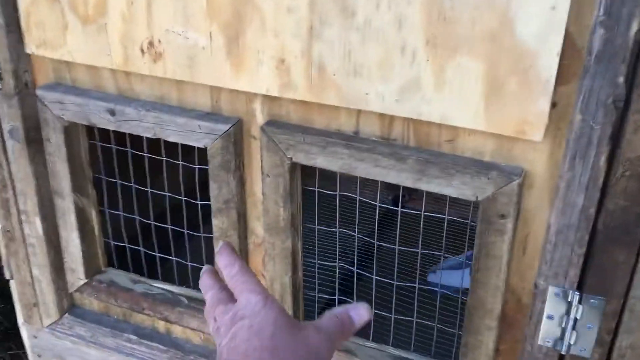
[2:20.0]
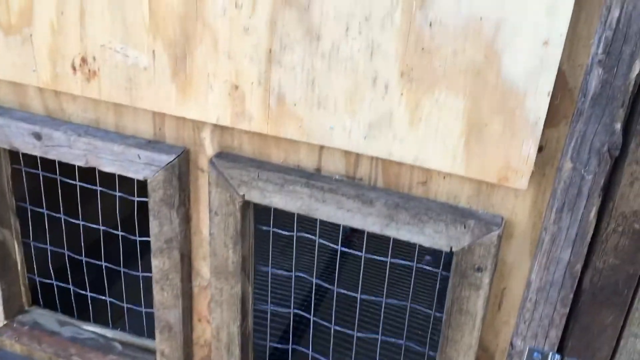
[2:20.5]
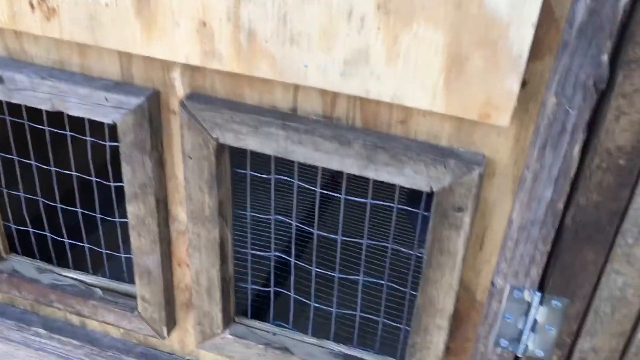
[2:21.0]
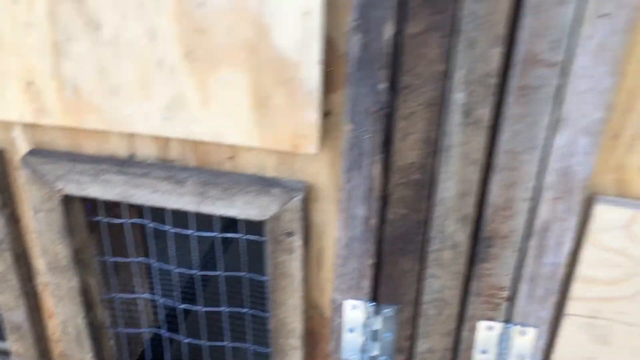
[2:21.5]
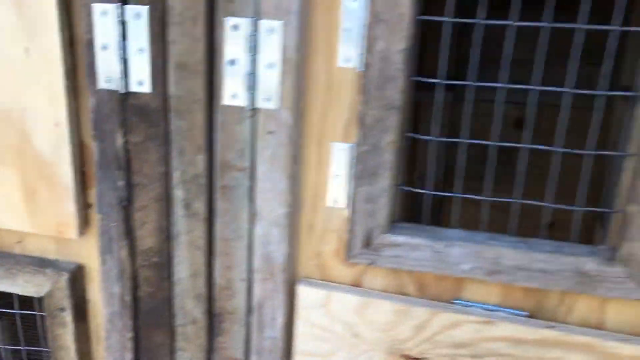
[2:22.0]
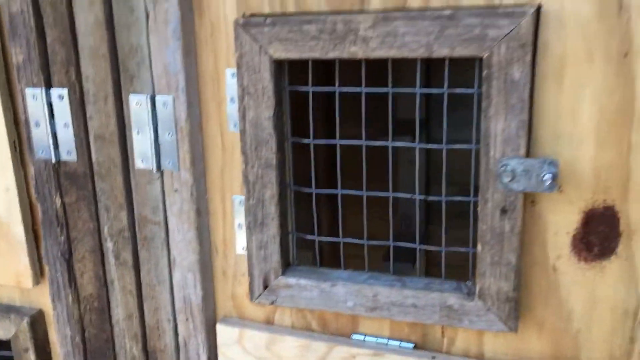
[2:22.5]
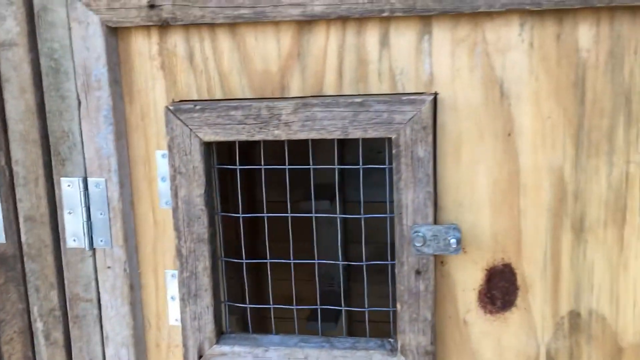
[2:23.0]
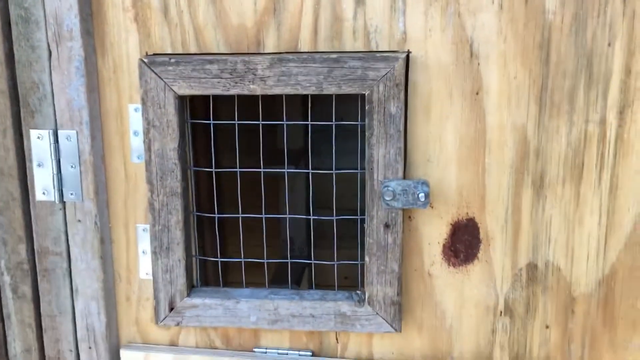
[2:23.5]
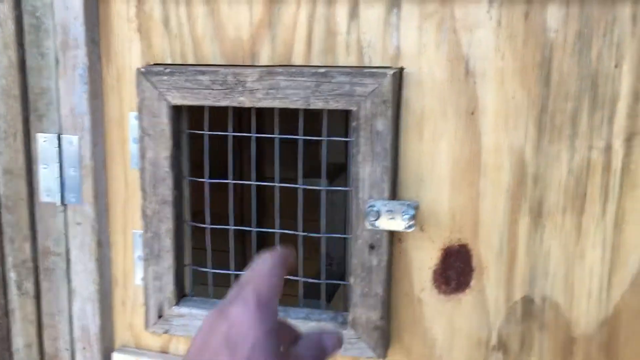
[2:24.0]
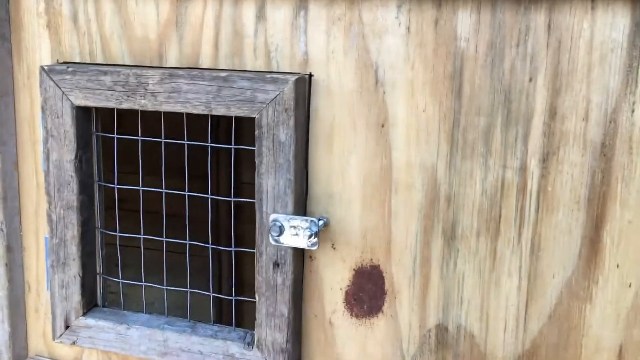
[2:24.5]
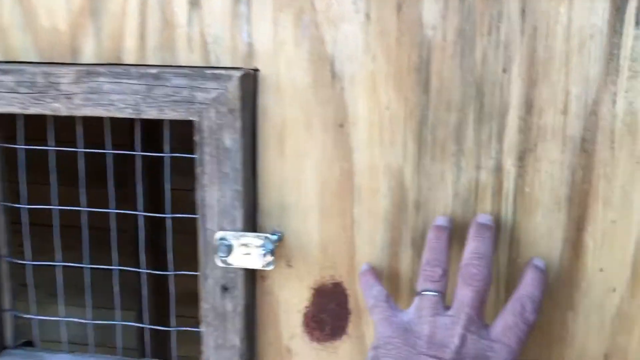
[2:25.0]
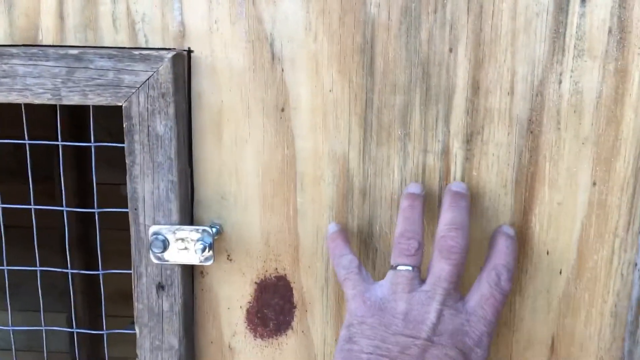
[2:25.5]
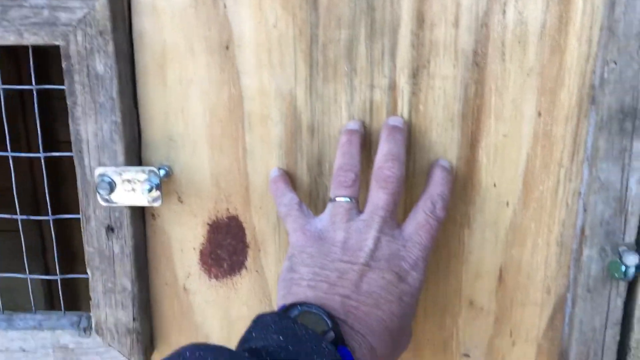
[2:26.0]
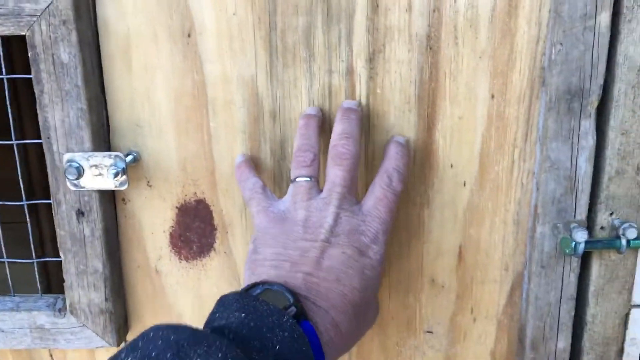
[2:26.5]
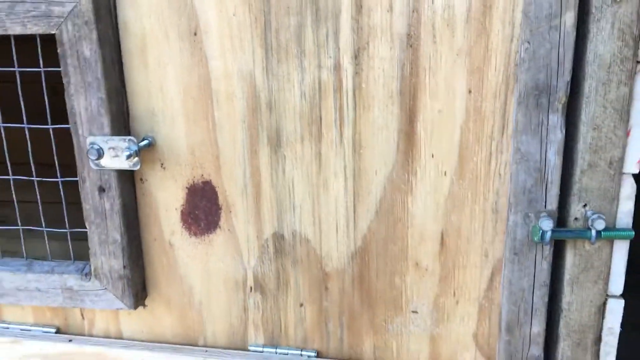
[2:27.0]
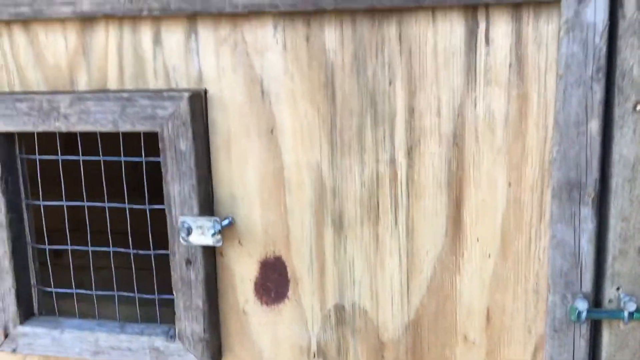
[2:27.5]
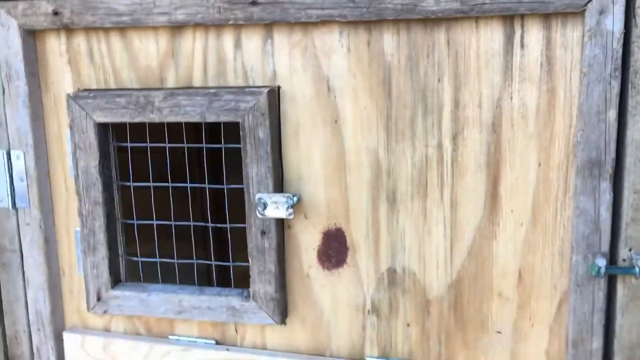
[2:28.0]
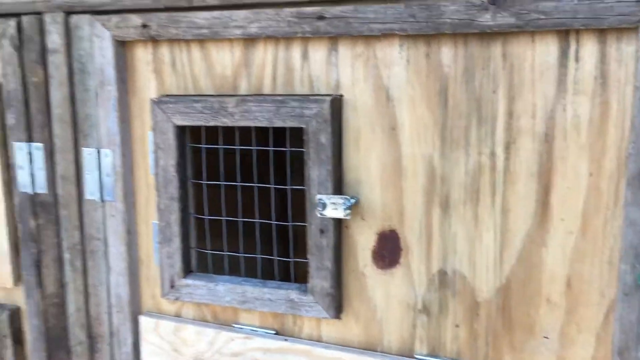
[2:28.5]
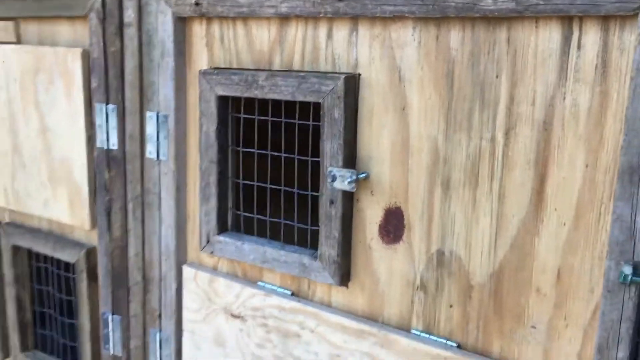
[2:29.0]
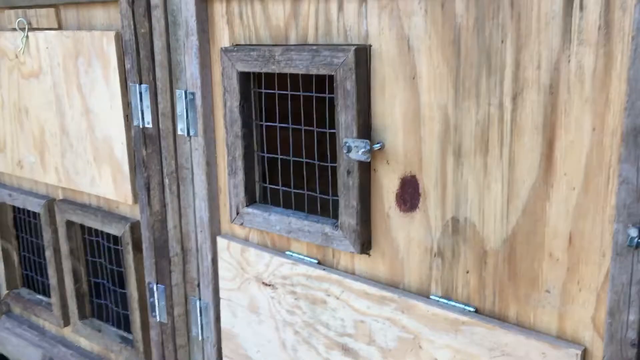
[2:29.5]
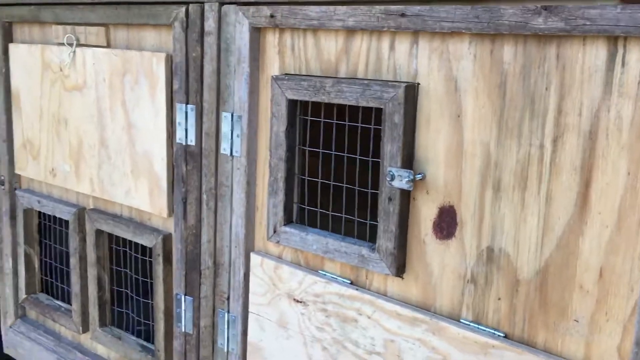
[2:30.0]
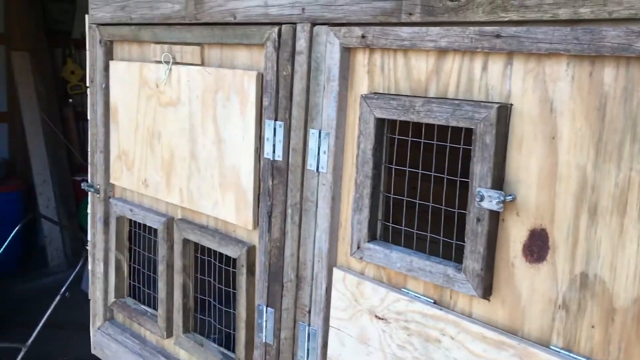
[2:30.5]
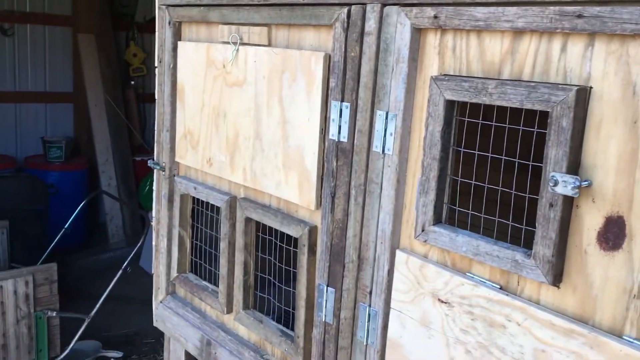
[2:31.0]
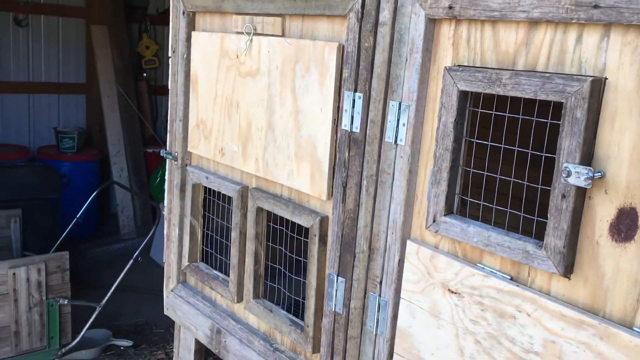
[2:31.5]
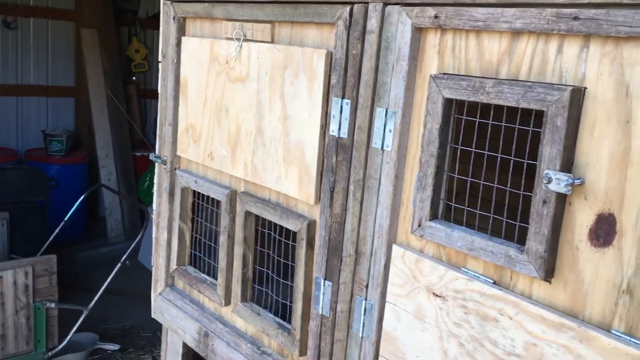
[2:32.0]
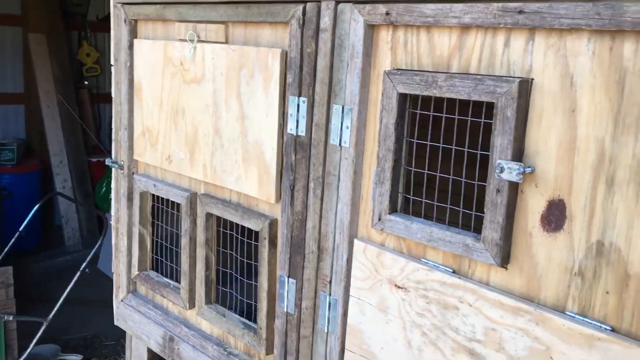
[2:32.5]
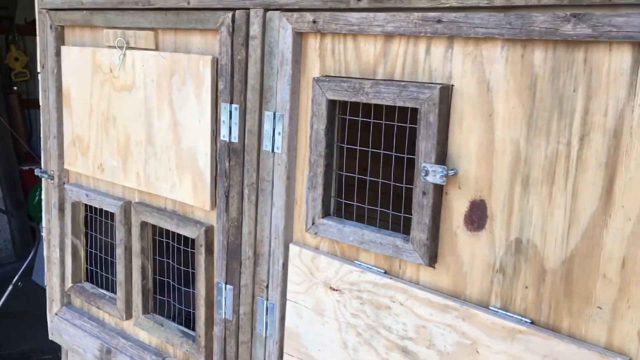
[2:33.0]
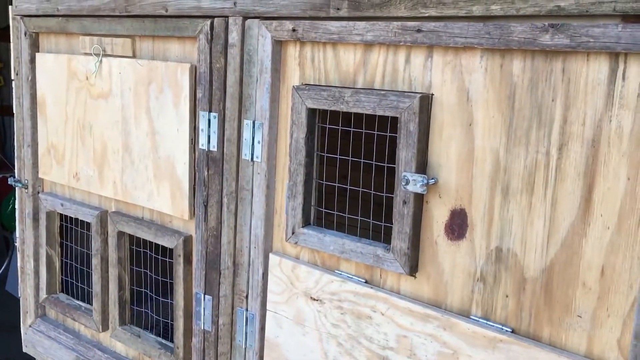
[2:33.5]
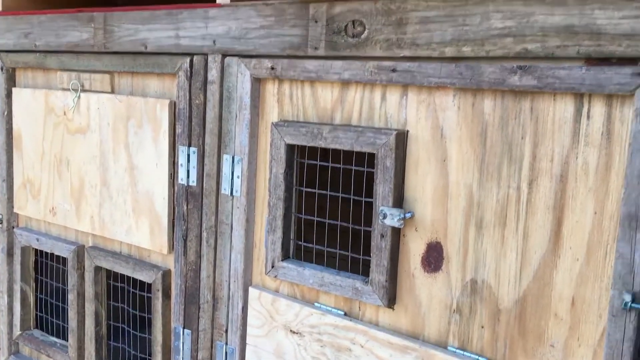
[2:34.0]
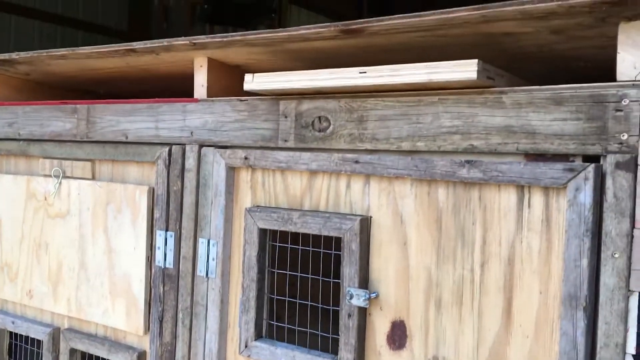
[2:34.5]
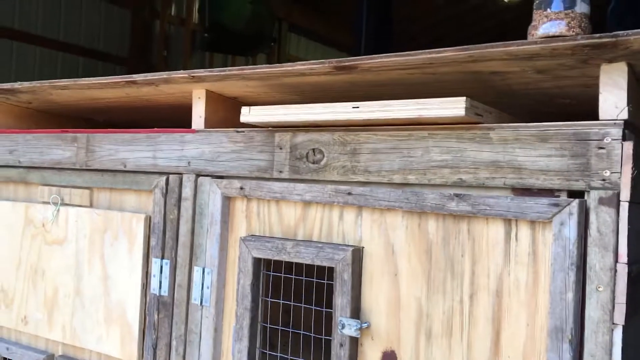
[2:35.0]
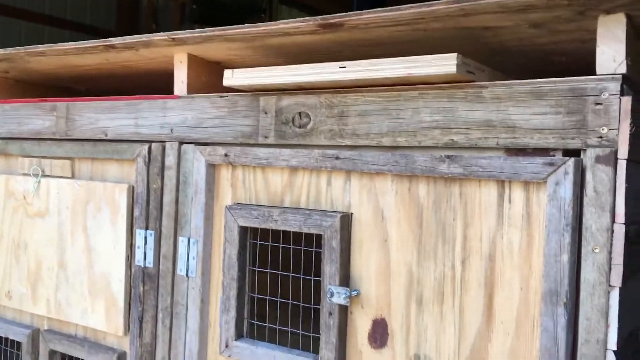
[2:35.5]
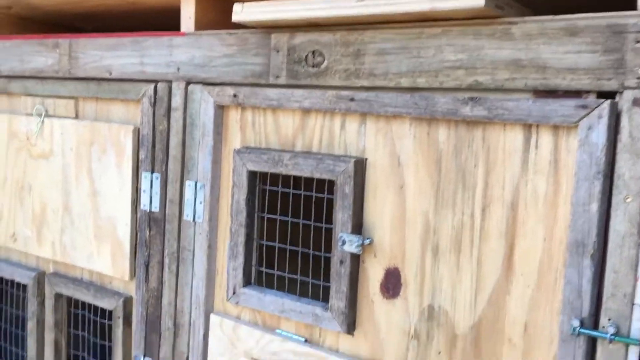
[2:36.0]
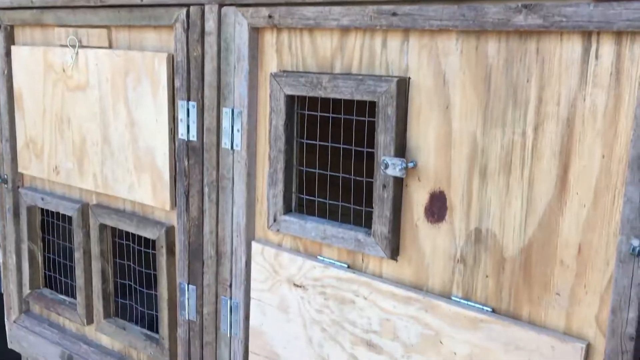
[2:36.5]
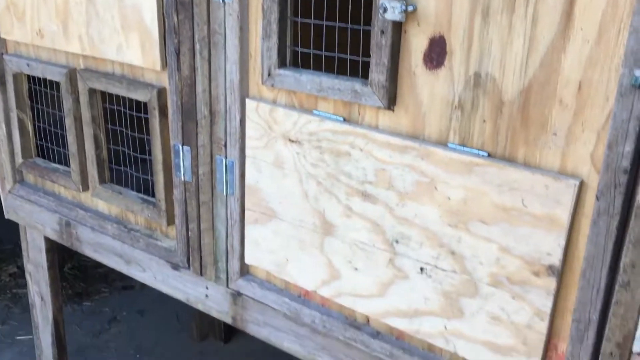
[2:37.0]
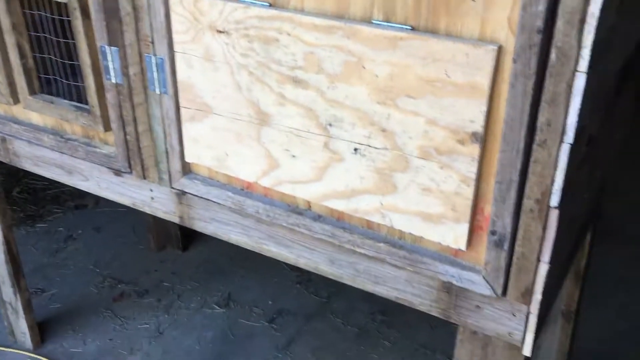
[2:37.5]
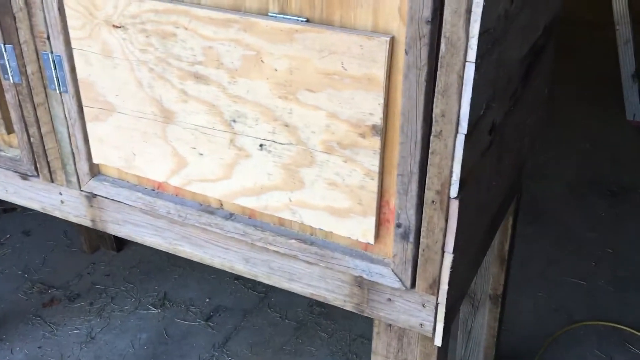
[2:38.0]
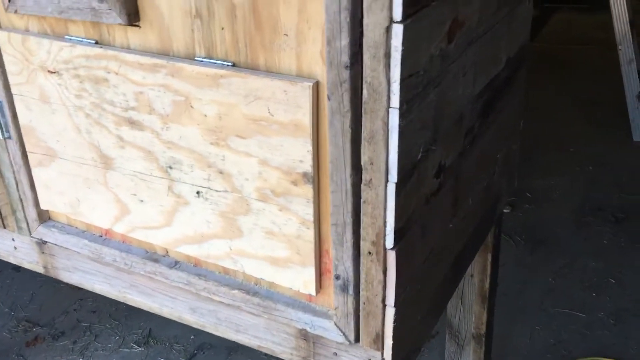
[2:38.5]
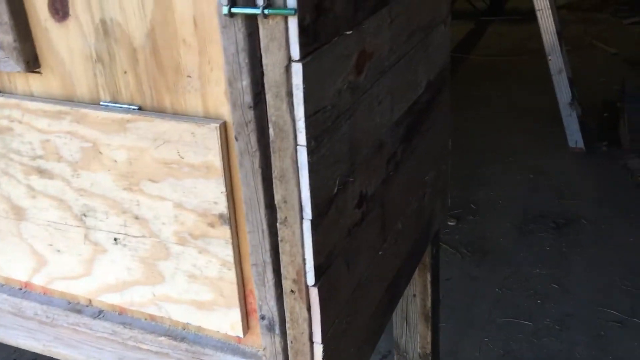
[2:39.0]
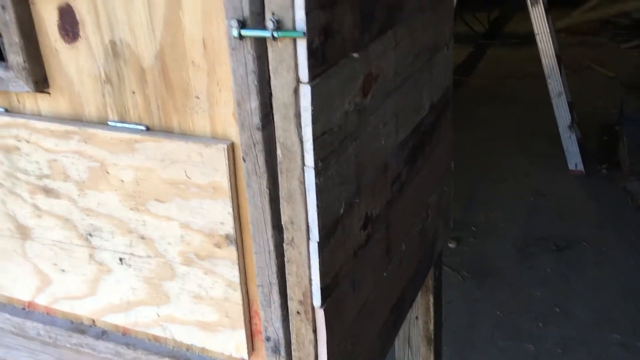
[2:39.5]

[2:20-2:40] The windows of the pigeon coop have wood around them and chicken wire in the middle. The man shows the next set of windows: there are two windows on one door and one window on the other door, apparently with room to add another window next to the single one. The front of the coop is shown. There is also a little door on one of the big doors, apparently so it can be opened without opening the whole door.